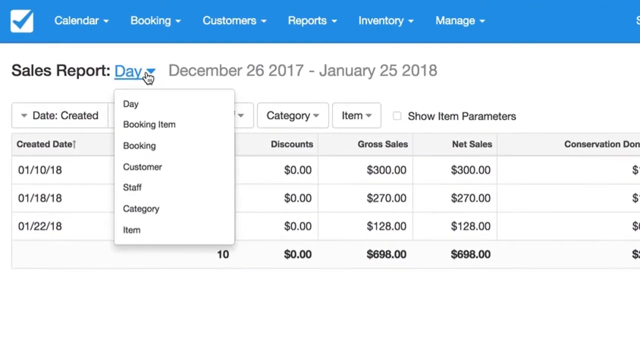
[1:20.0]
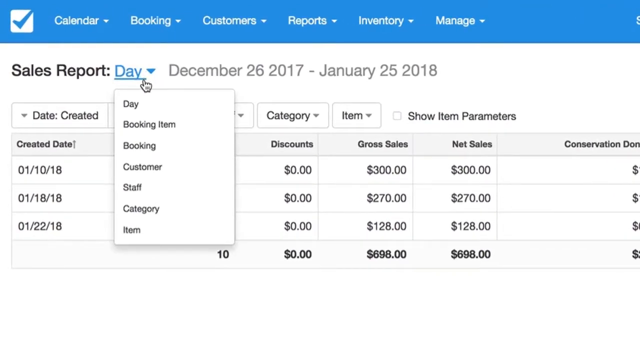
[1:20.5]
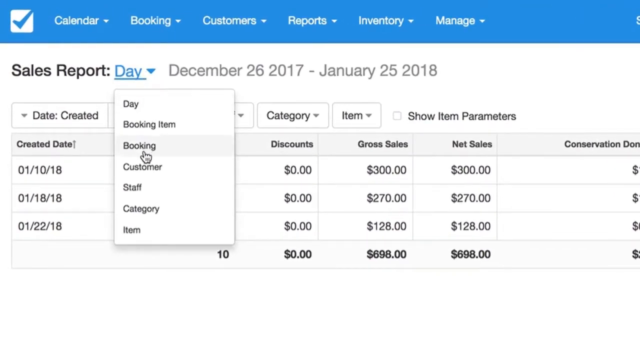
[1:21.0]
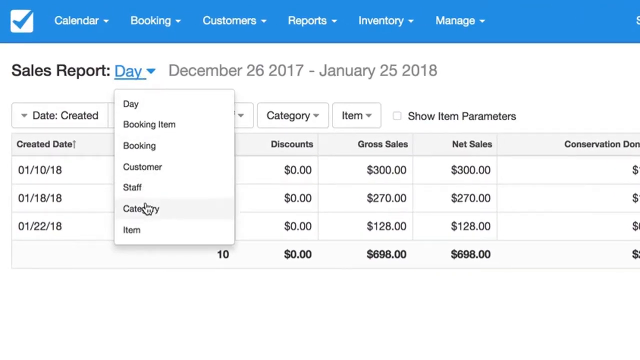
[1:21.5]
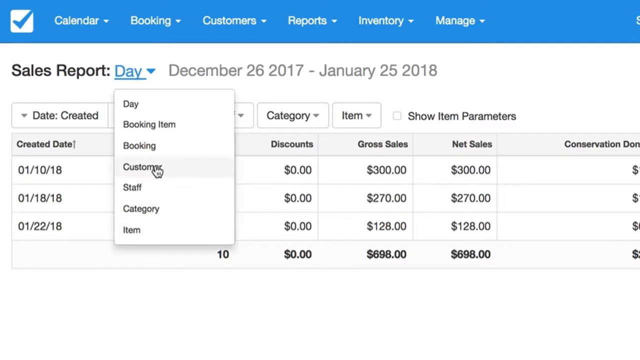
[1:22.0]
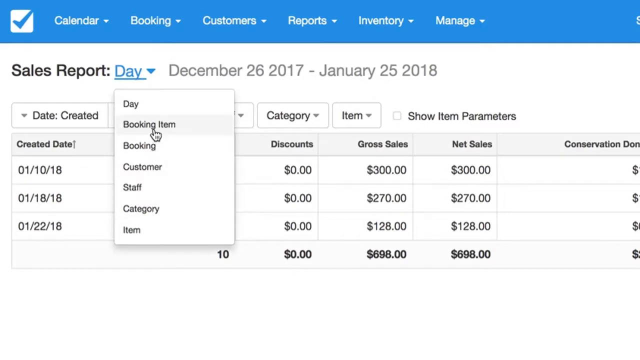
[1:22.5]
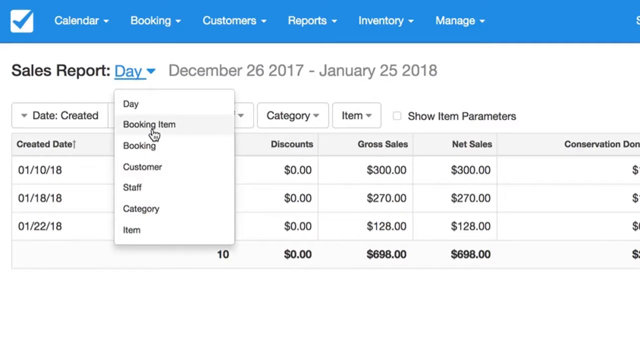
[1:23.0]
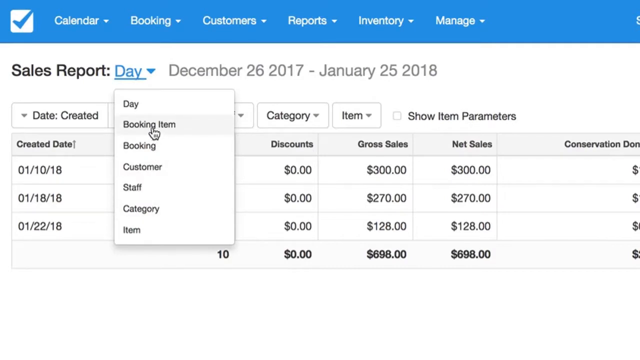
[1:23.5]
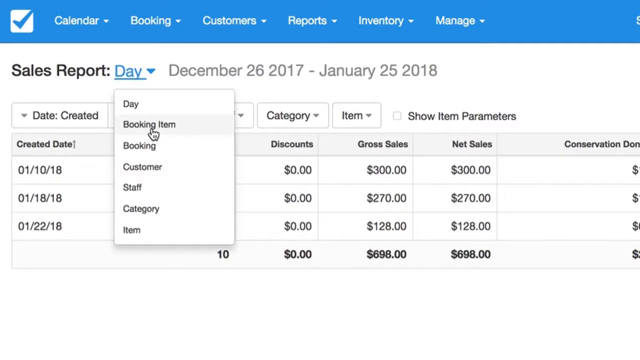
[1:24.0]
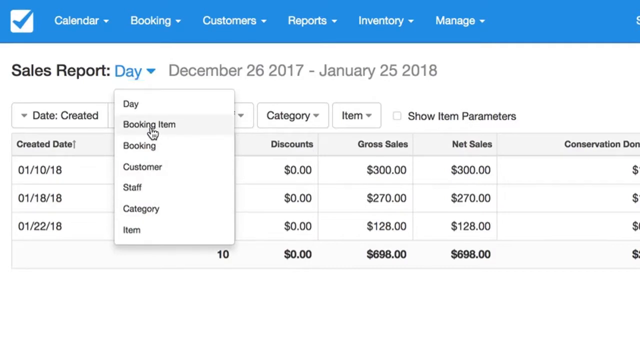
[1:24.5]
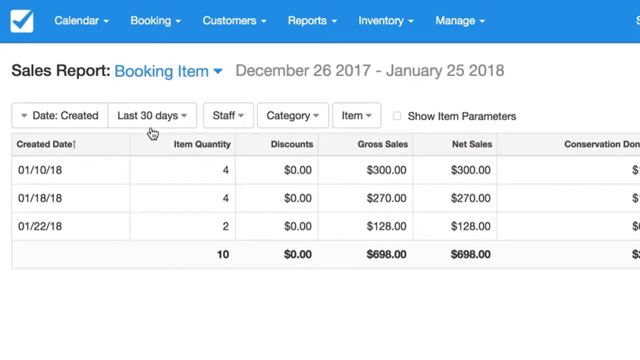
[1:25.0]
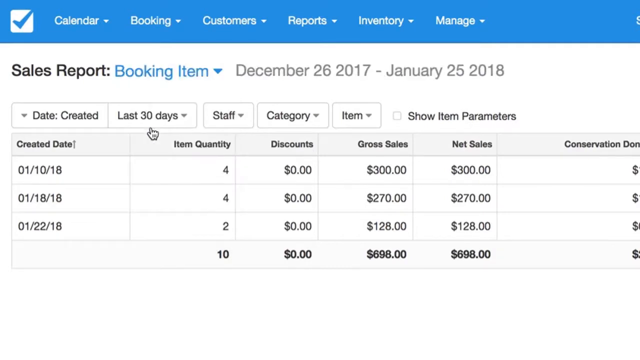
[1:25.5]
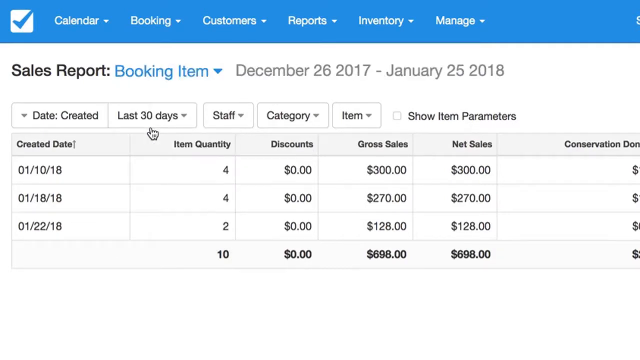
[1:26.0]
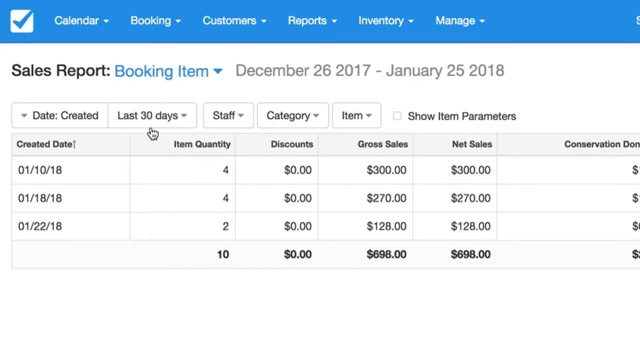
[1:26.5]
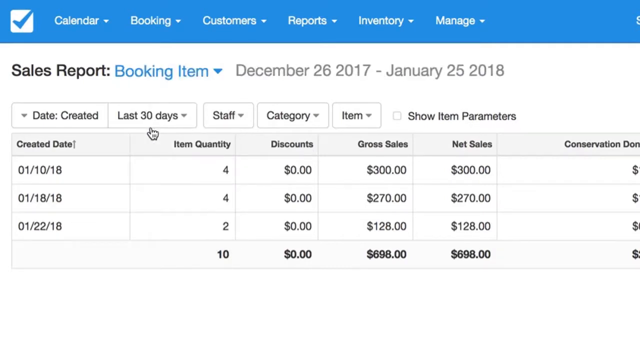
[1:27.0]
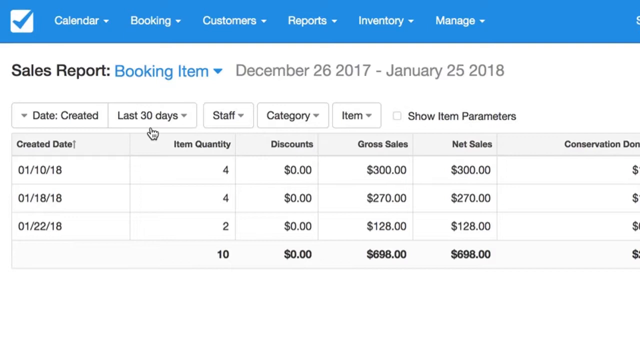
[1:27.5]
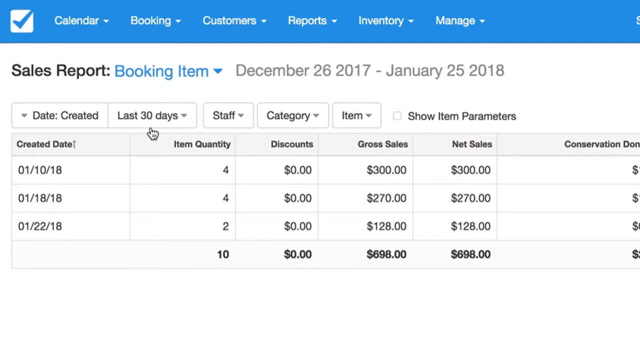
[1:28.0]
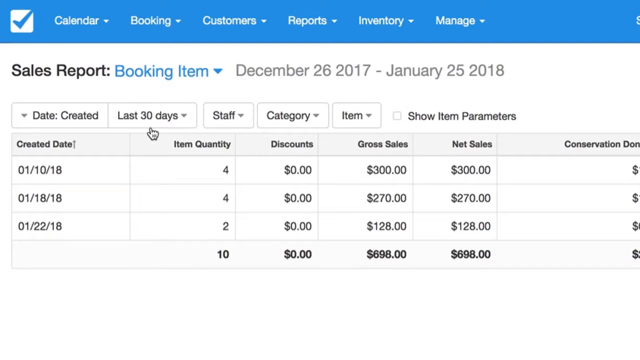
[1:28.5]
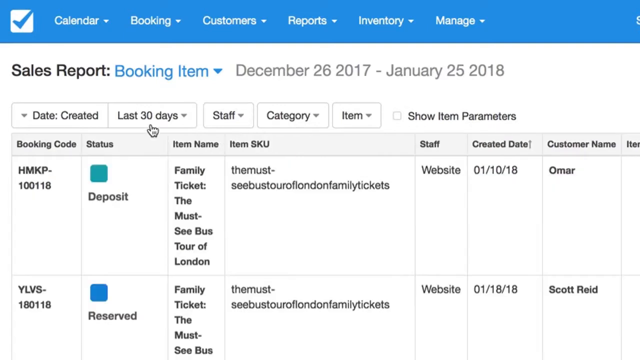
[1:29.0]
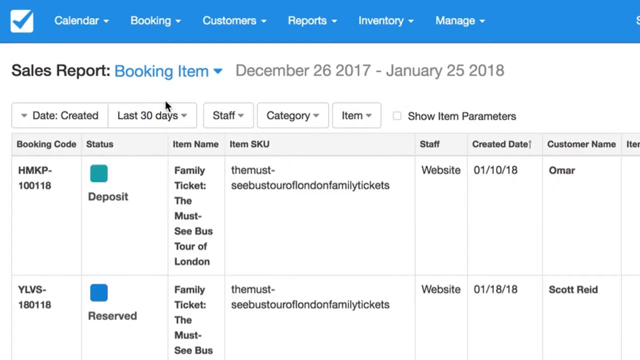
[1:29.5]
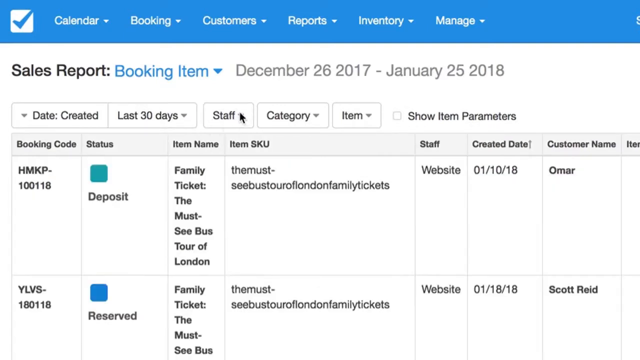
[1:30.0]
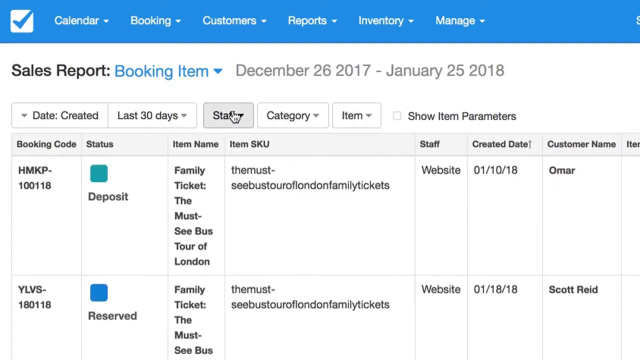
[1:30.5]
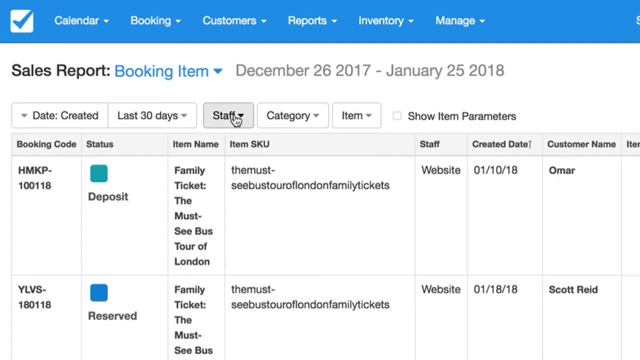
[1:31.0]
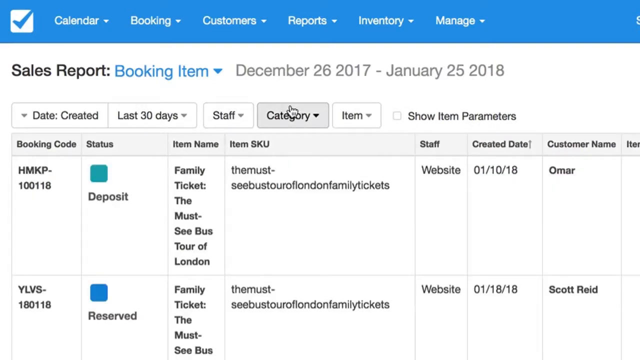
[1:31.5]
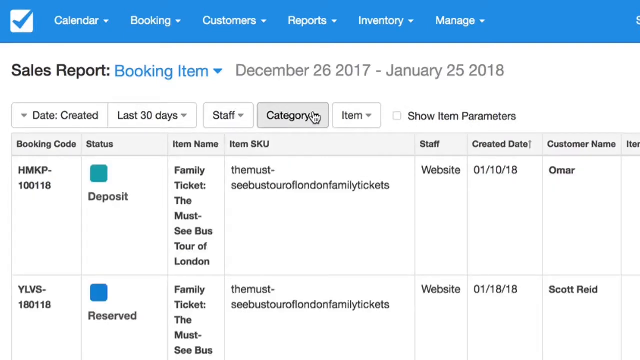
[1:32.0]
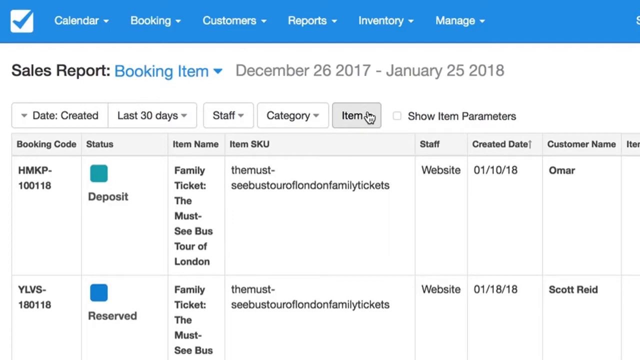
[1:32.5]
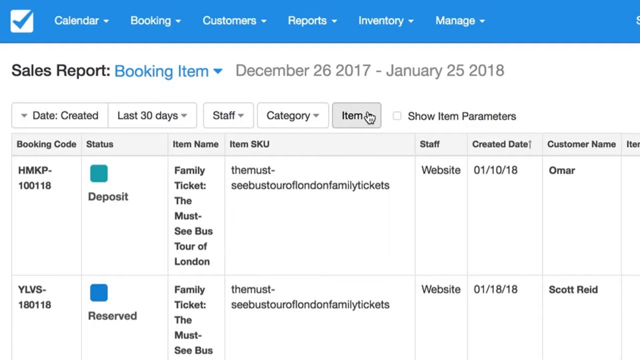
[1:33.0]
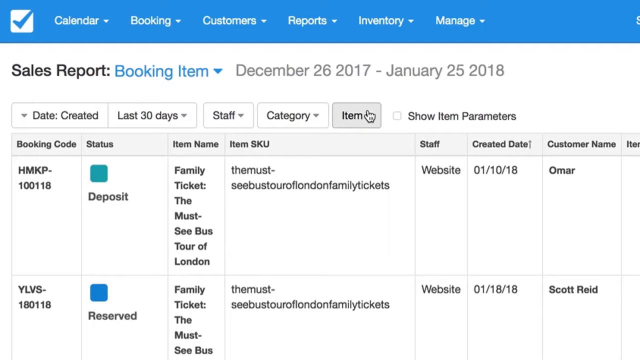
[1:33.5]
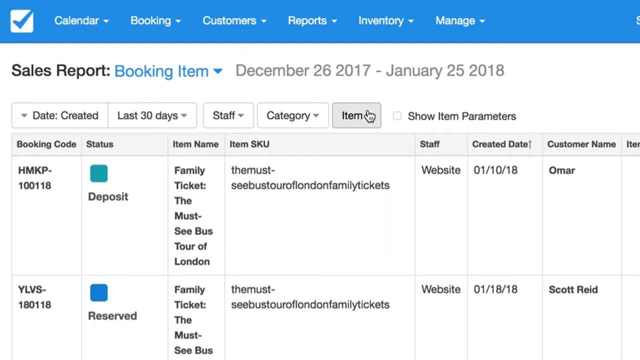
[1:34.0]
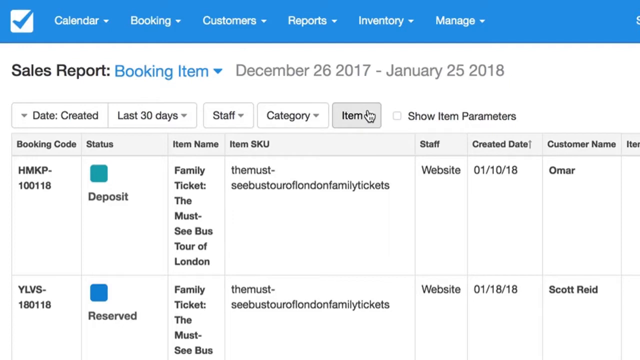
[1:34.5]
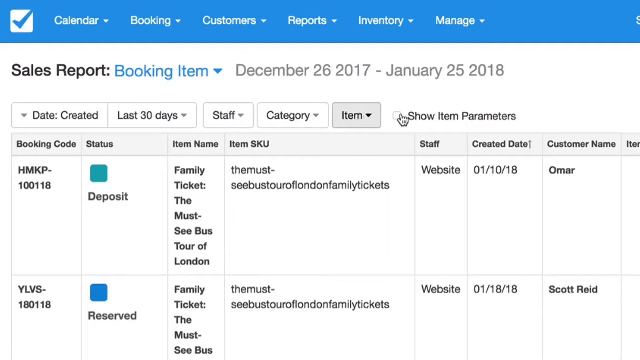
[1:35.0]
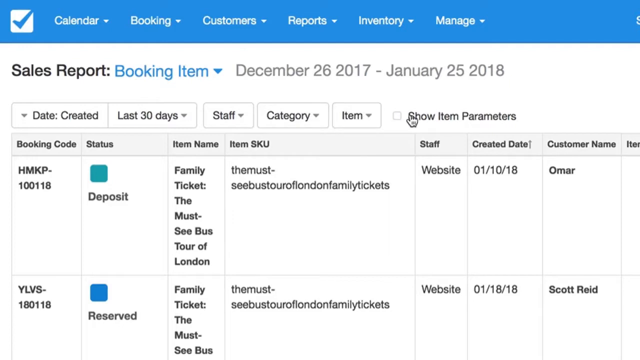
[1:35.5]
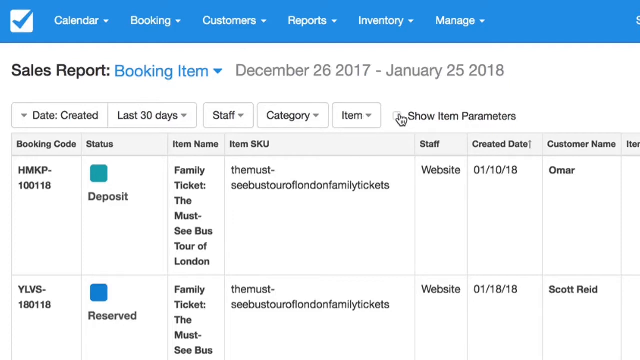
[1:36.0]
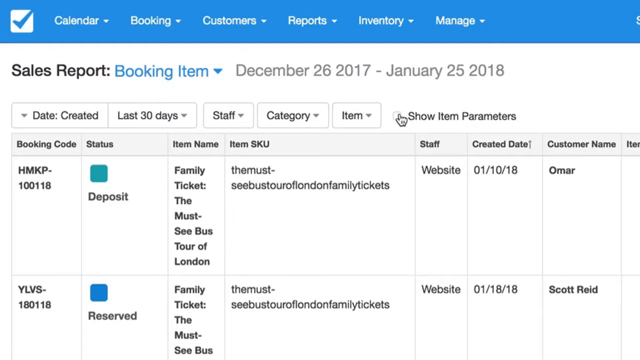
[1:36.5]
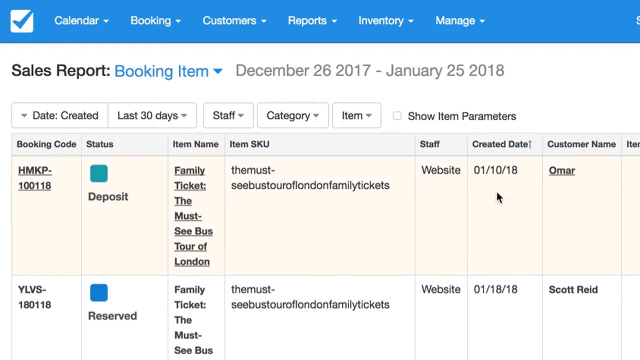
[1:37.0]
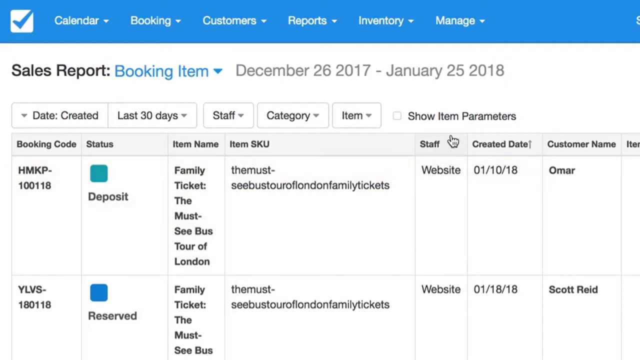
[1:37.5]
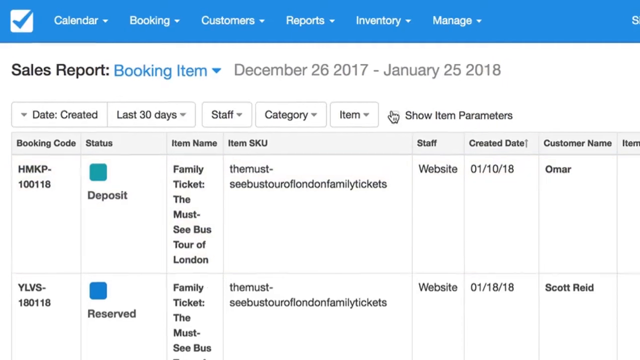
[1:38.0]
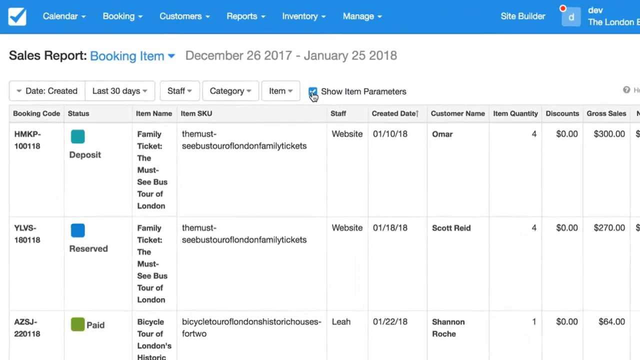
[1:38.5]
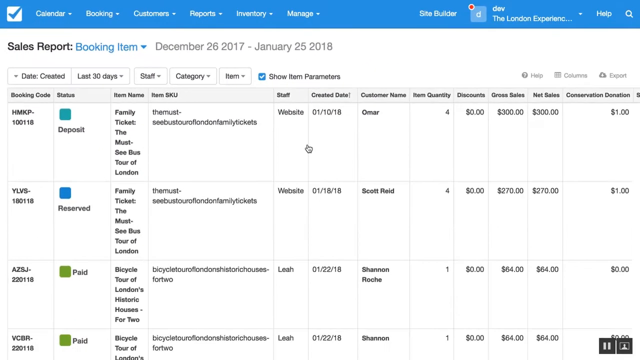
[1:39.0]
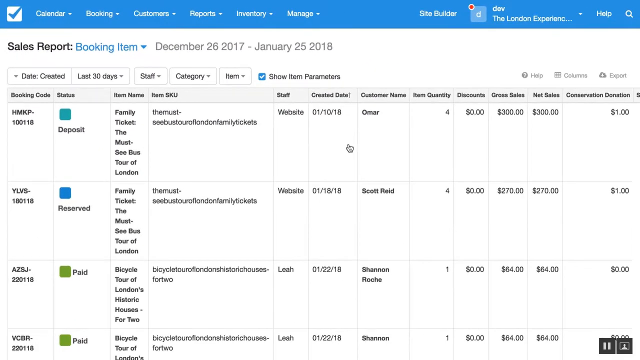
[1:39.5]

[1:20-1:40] The mouse pointer moves down through the small list to category, then back up to booking item, and selects it. The top of the page now reads "sales report, booking item, December 26, 2017 to January 25," and the information on the bottom of the page changes. The pointer, which was over "last 30 days," moves over the staff button, then the category button, then the item button. It then goes to the right side over a checkbox labeled "show item parameters," moves away without checking it, and then checks it, showing a blue check mark. The view zooms outward, giving a better view of the page, which has a very large table of information. Across the top, from the left, the columns are booking code, status, item name, item SKU, staff, created date, customer name, item quantity, discounts, gross sales, net sales, and conversation donation.